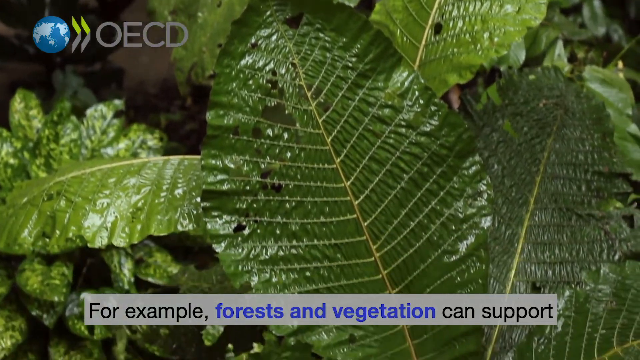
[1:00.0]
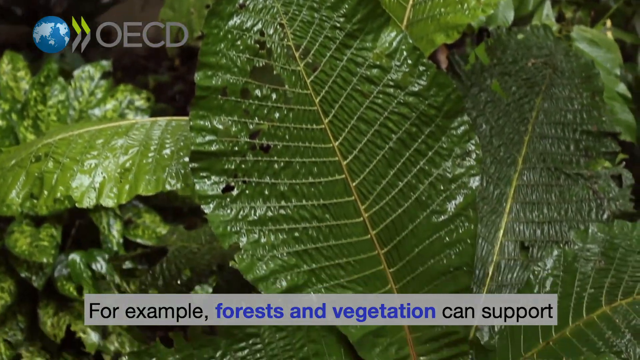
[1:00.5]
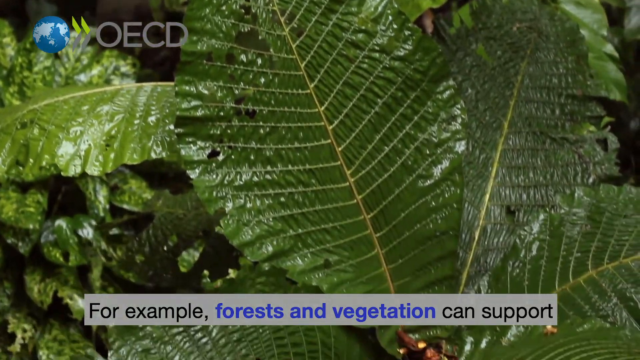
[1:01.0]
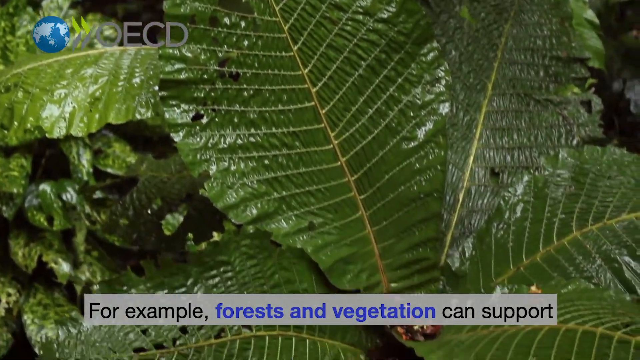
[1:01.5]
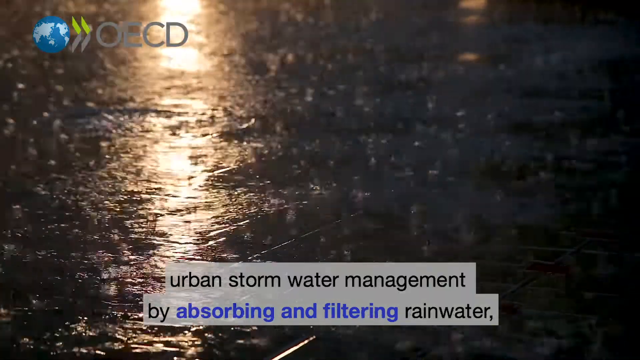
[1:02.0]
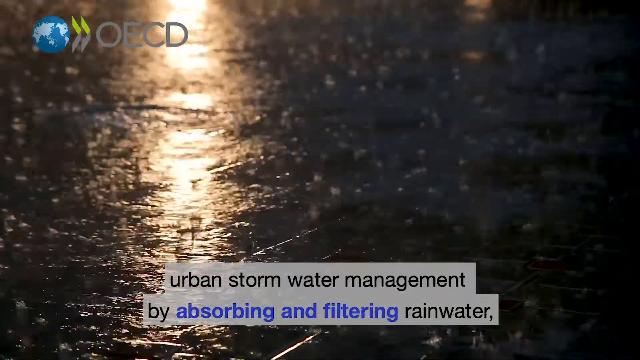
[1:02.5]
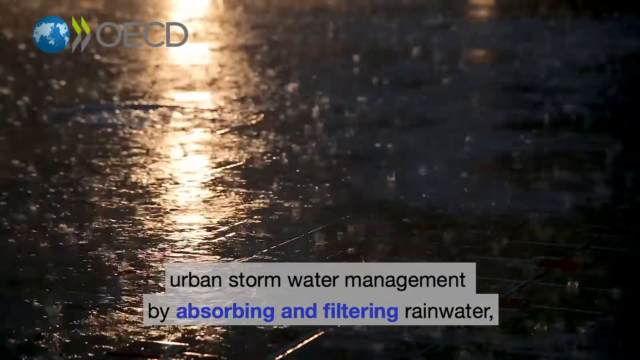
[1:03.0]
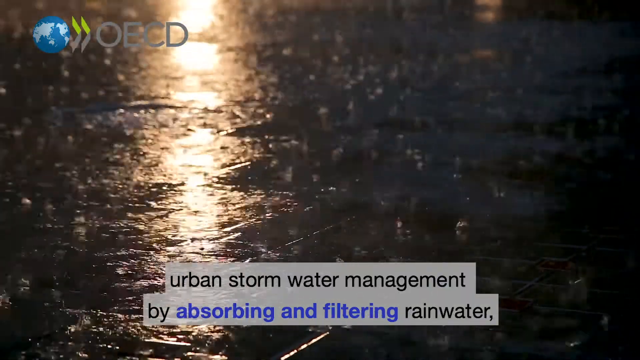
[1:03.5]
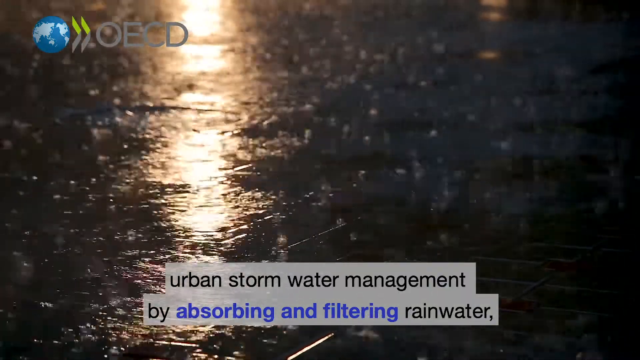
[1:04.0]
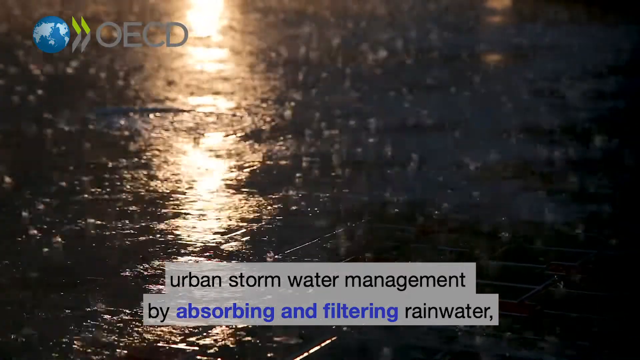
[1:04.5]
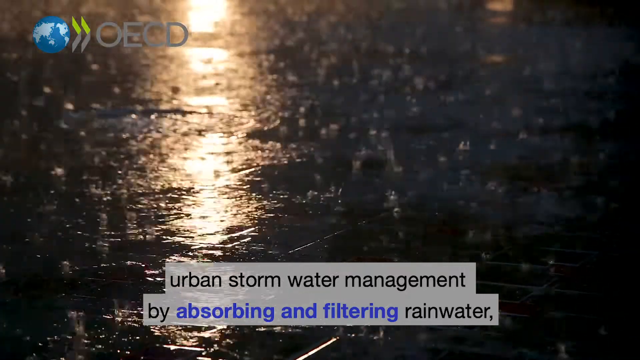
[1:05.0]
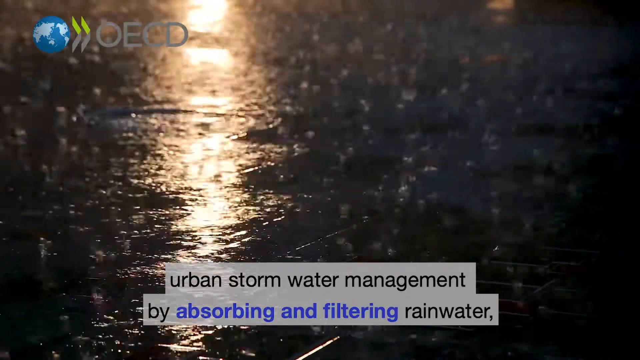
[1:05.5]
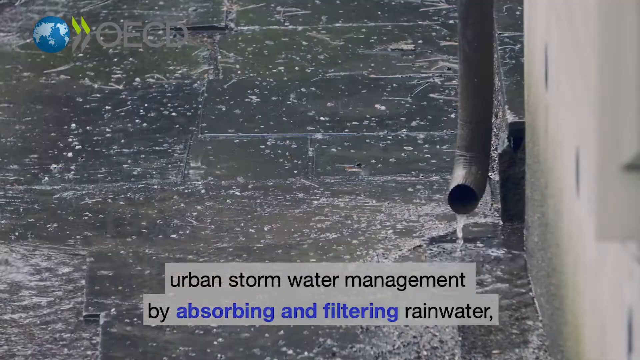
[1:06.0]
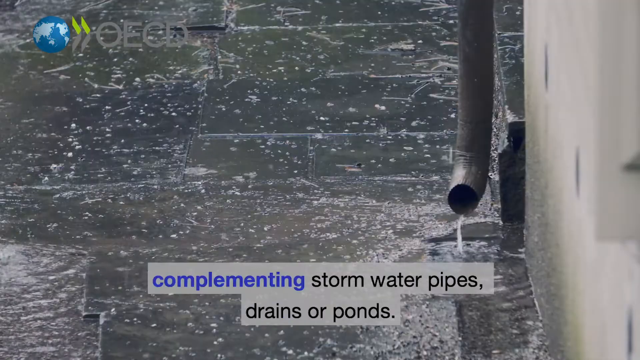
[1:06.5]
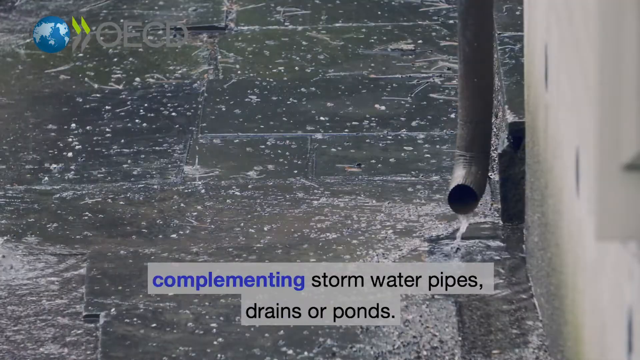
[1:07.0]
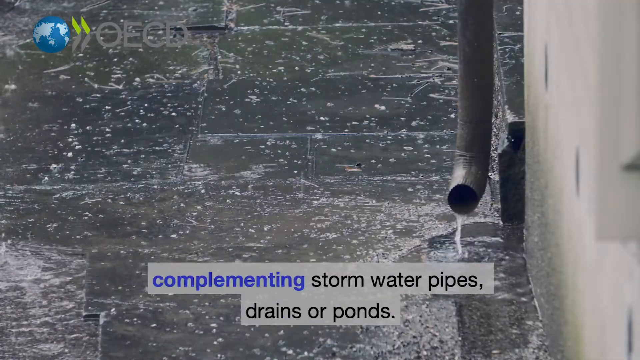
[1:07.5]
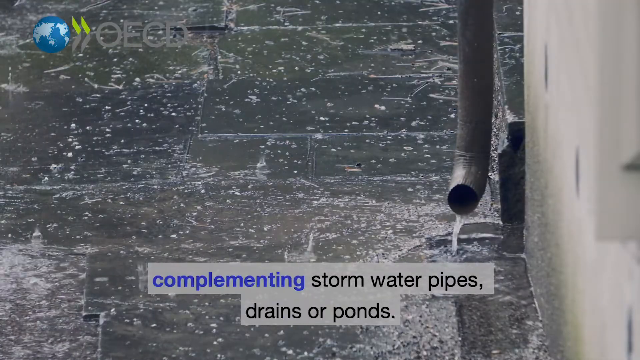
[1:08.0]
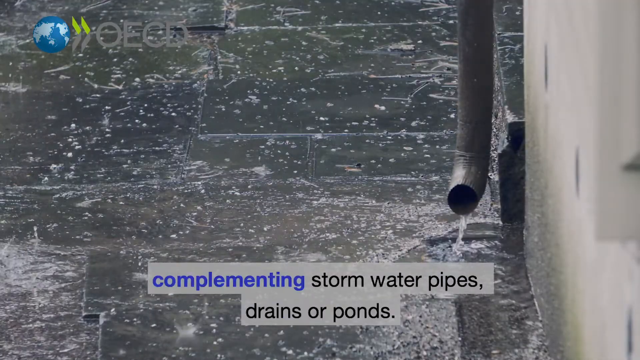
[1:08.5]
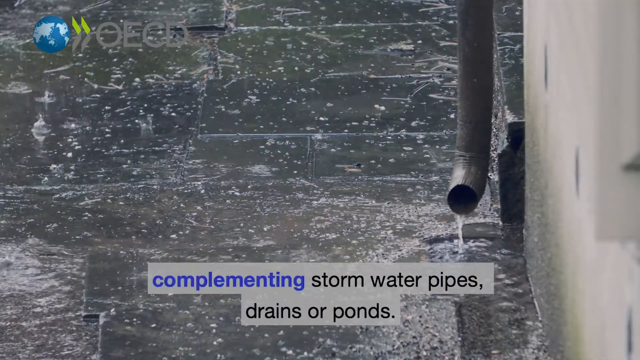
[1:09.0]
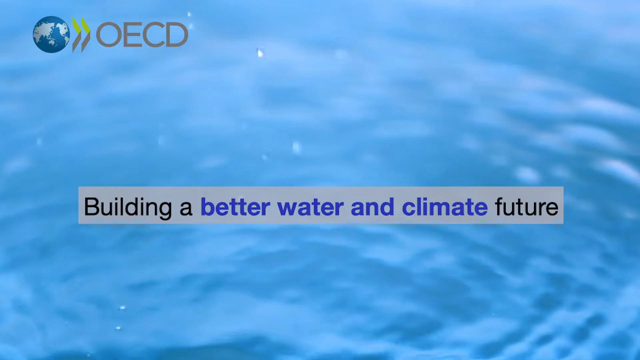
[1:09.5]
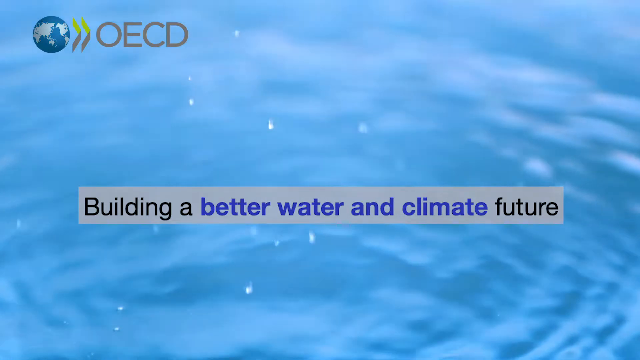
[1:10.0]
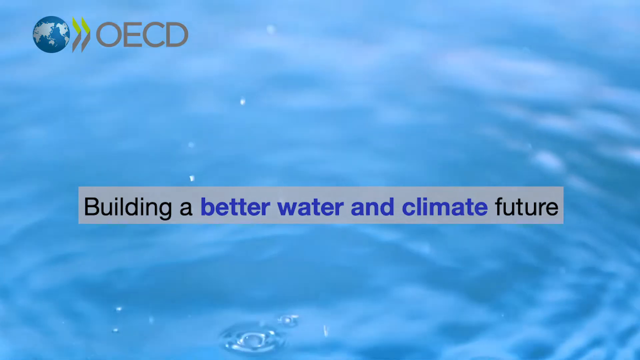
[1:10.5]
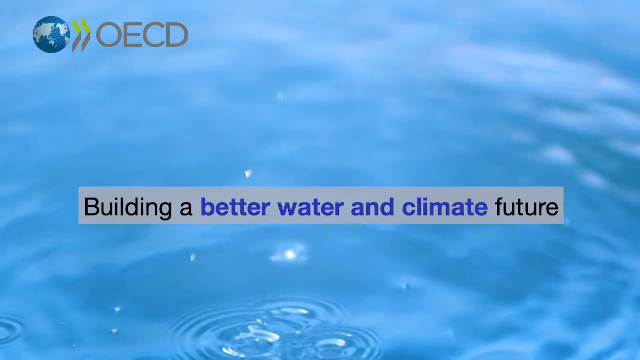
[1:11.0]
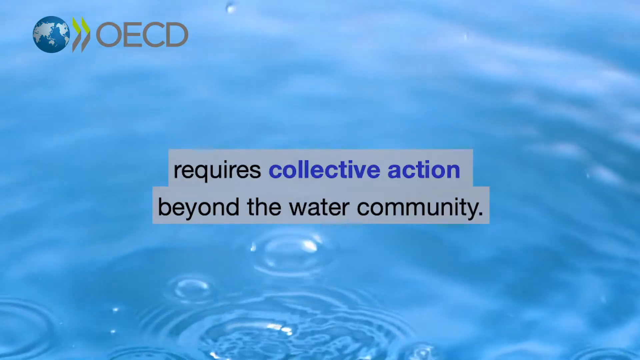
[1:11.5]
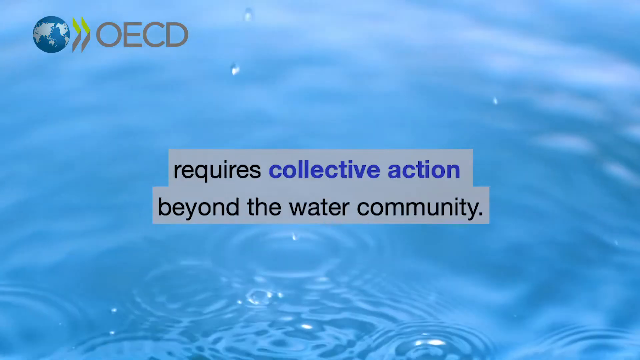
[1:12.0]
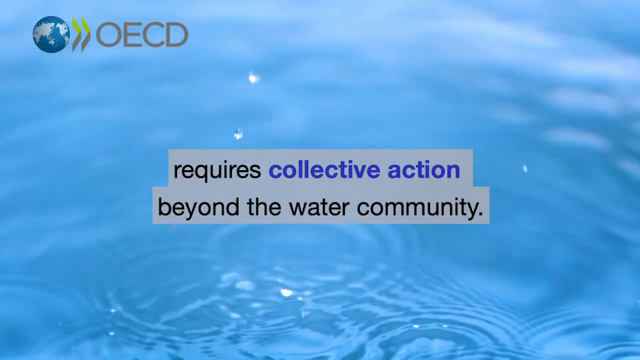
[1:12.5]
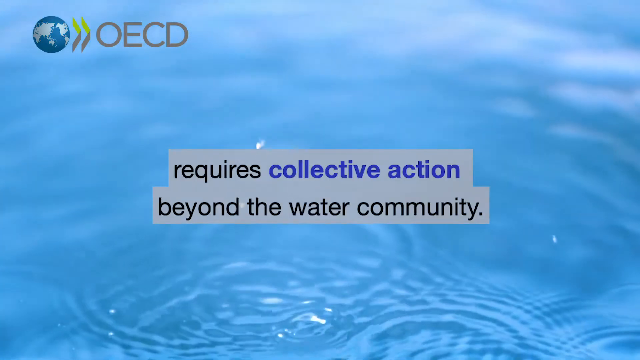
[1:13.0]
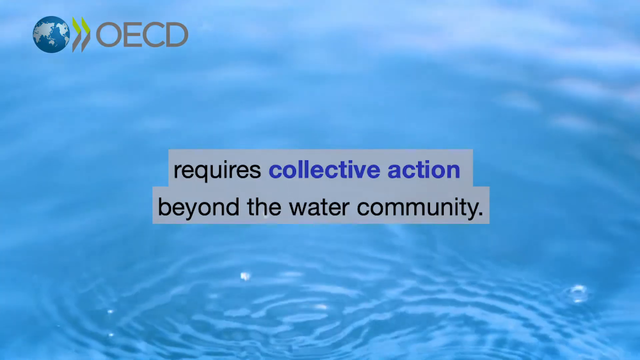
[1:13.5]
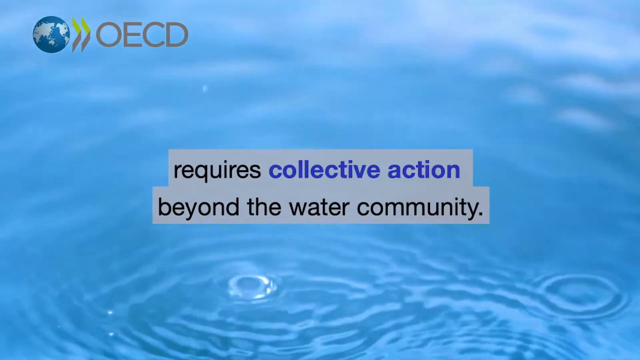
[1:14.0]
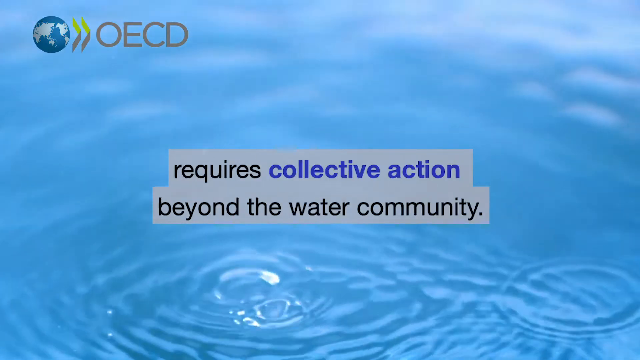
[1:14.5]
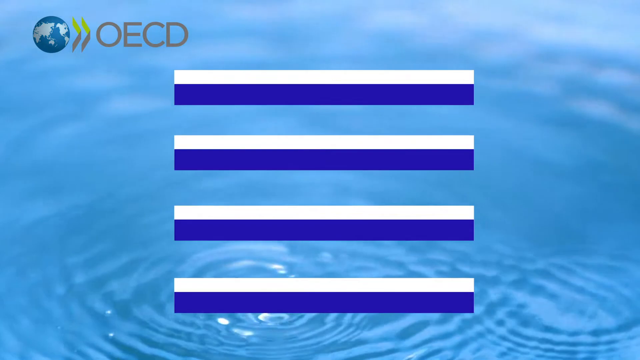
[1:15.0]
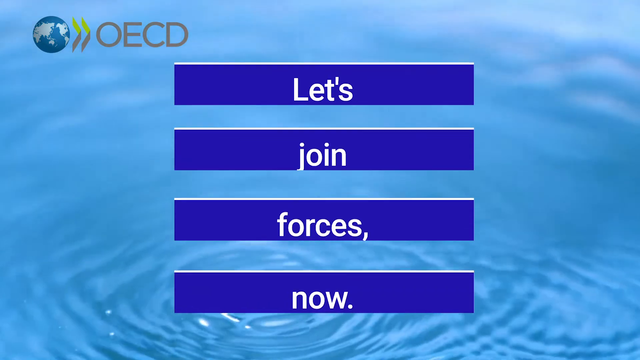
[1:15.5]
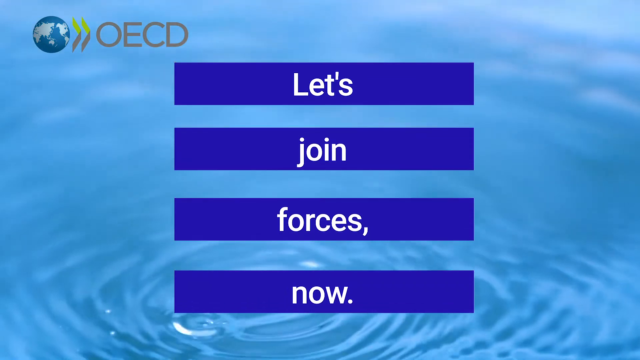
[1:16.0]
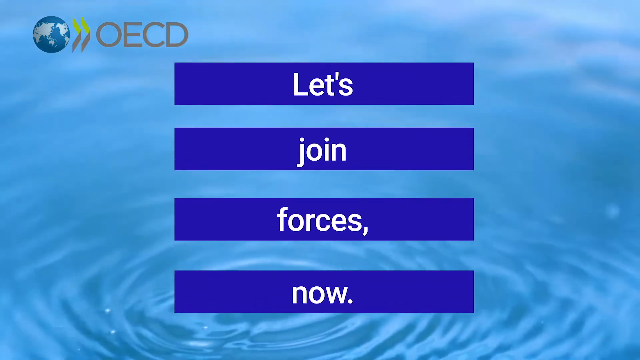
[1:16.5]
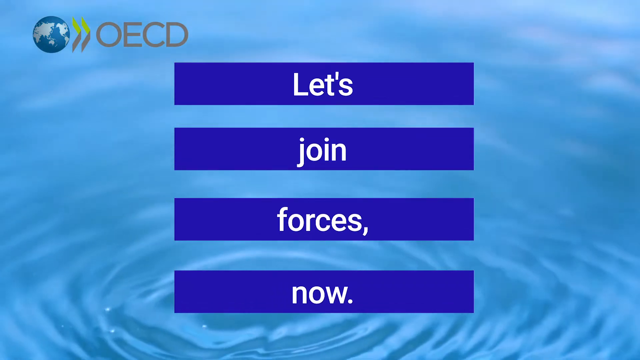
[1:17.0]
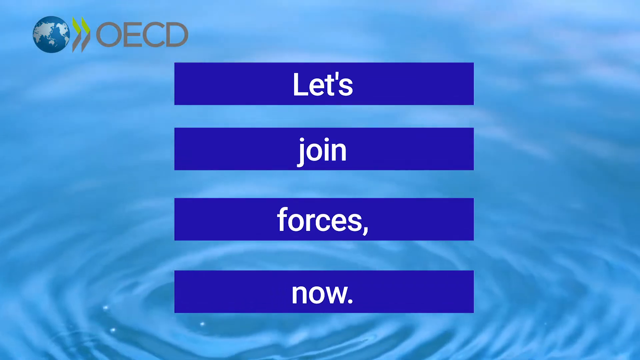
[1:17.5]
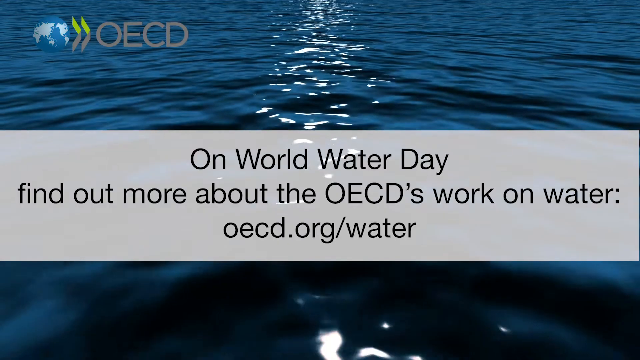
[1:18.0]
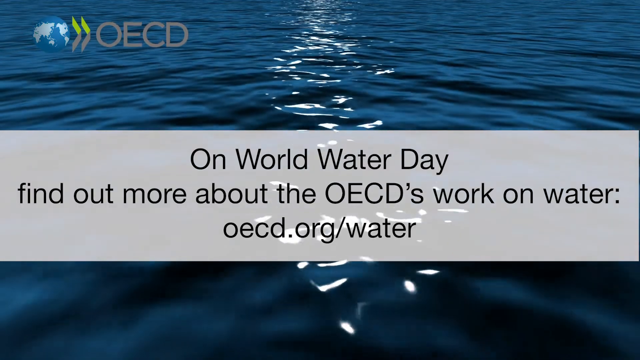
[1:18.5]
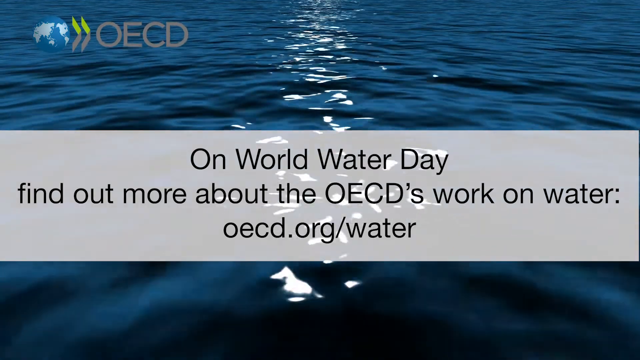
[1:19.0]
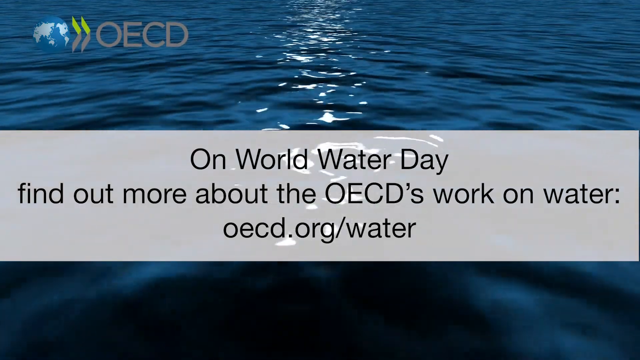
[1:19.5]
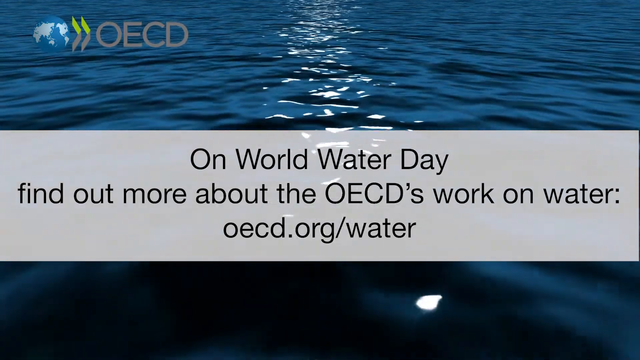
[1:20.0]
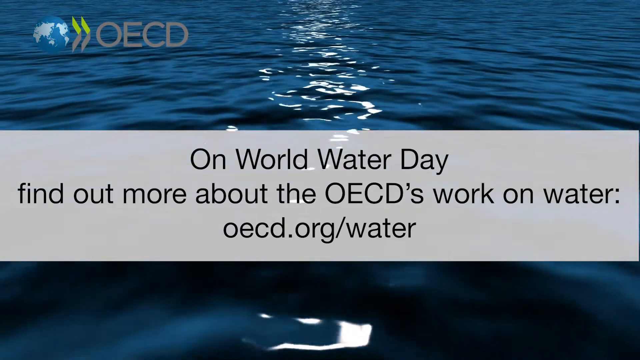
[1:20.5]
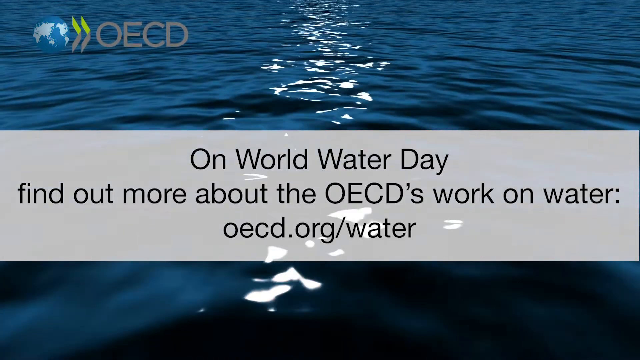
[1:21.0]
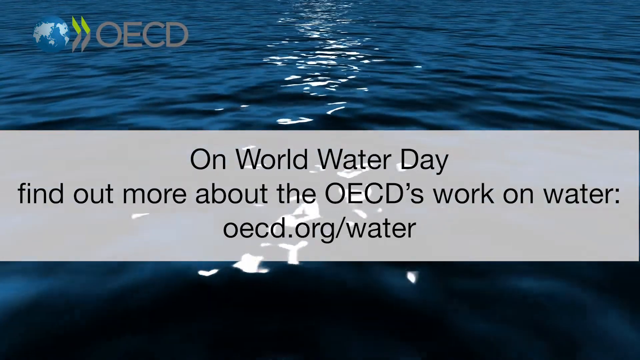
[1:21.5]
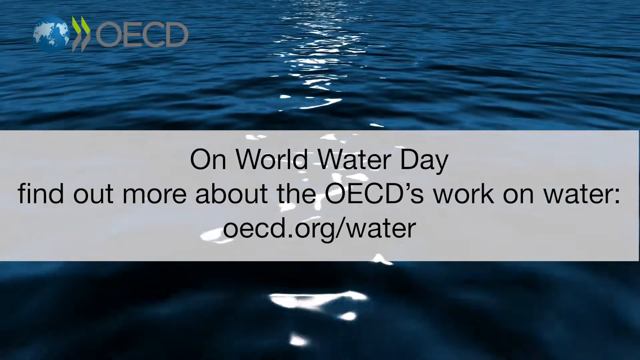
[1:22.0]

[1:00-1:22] Text mentions that forests and vegetation can support urban stormwater management by absorbing and filtering rainwater, and that they can complement stormwater pipes, drains or ponds, as footage of drainage systems appears. Further text mentions that building a better water and climate system requires collective action beyond the water community, and asks "let's join forces now." At the end, a big banner mentions World Water Day and invites viewers to find out more about the OECD's work on water at the website "oecd.org/water", set against a background of an ocean. In the top left-hand corner is a little globe of the world, two arrows, and "OECD" in capital letters.